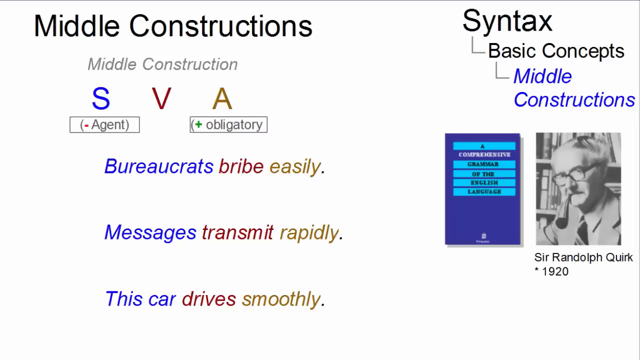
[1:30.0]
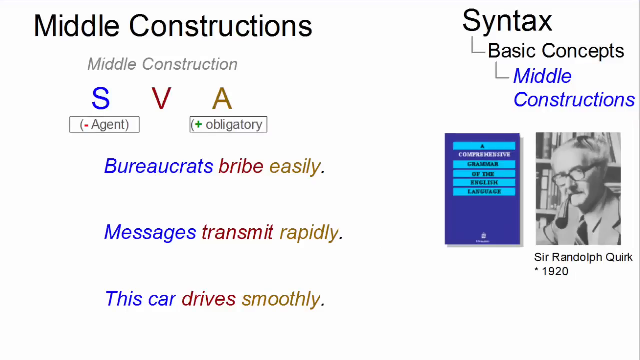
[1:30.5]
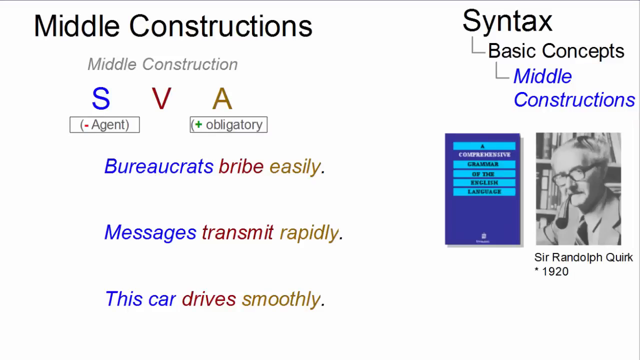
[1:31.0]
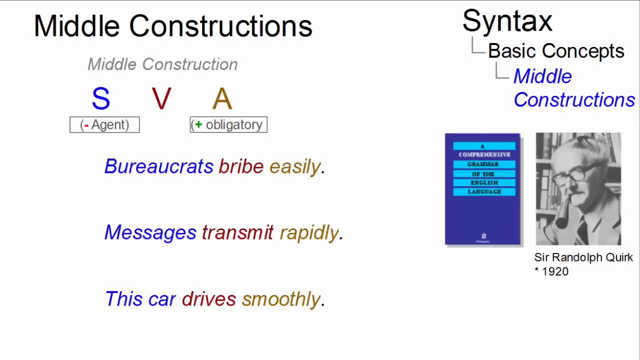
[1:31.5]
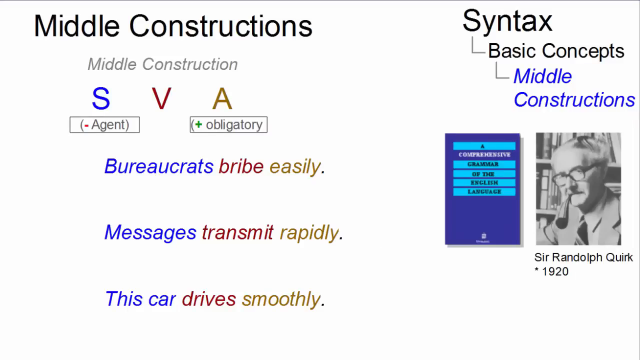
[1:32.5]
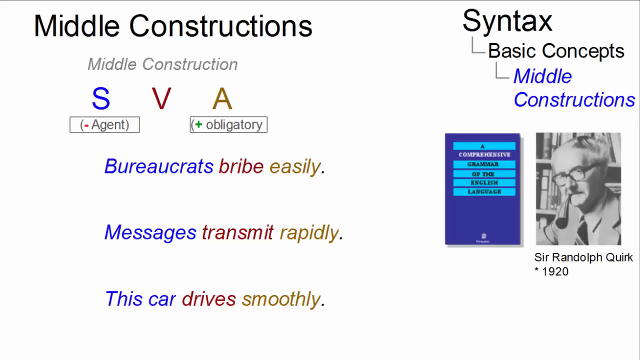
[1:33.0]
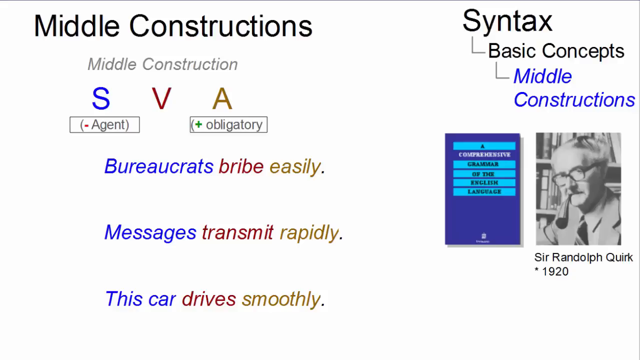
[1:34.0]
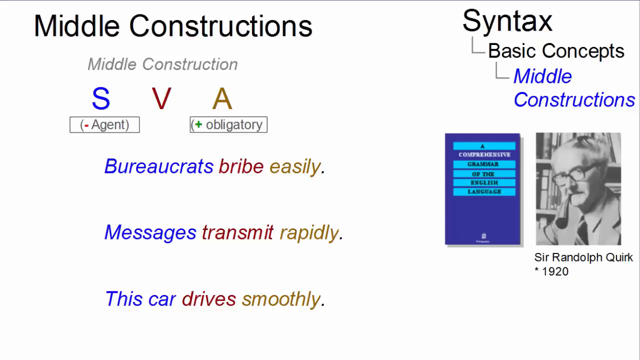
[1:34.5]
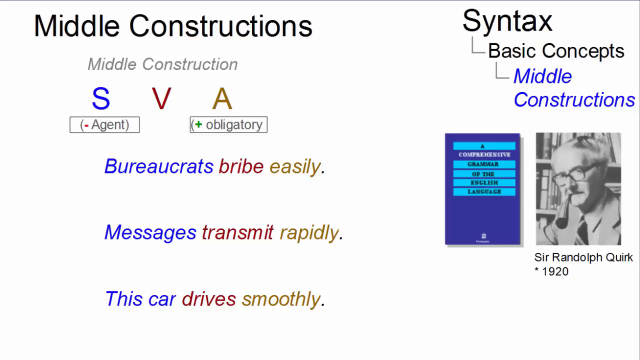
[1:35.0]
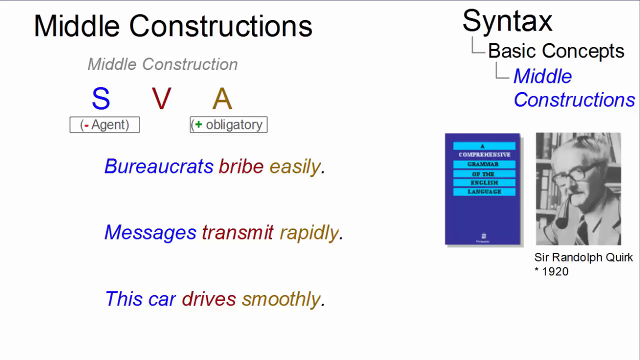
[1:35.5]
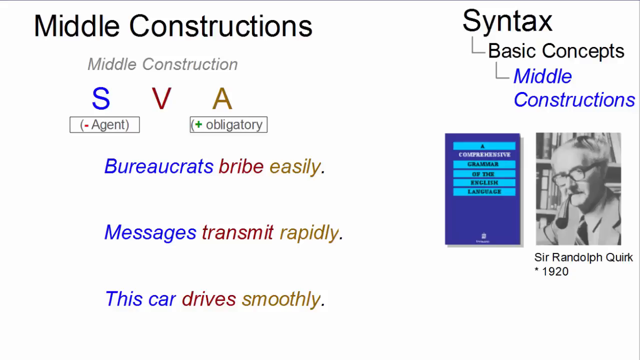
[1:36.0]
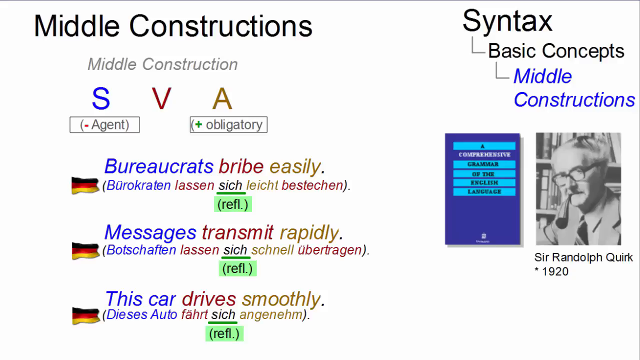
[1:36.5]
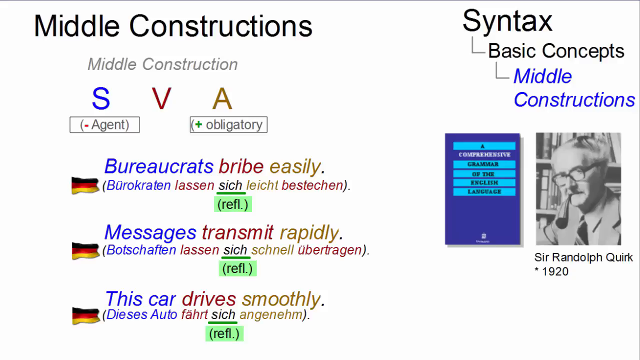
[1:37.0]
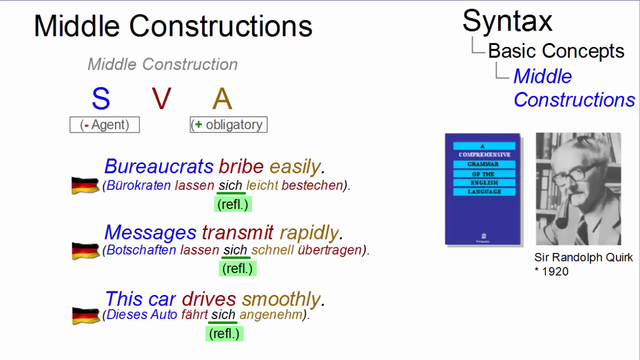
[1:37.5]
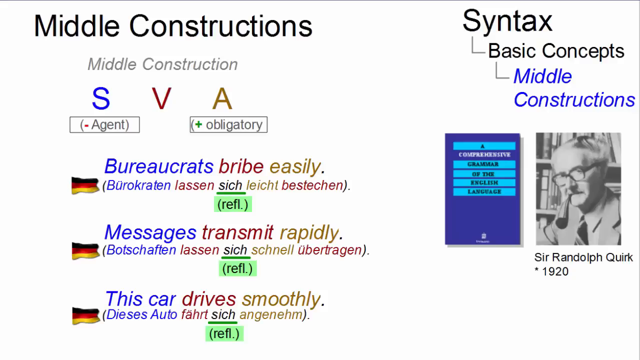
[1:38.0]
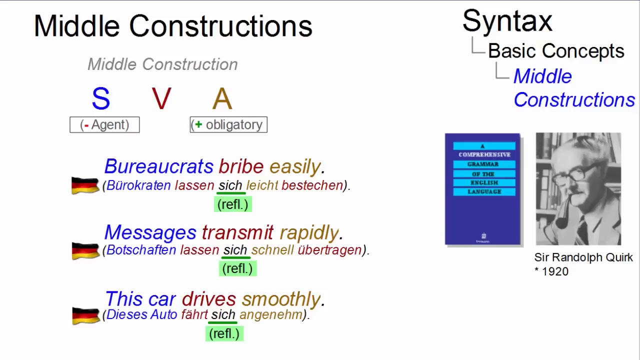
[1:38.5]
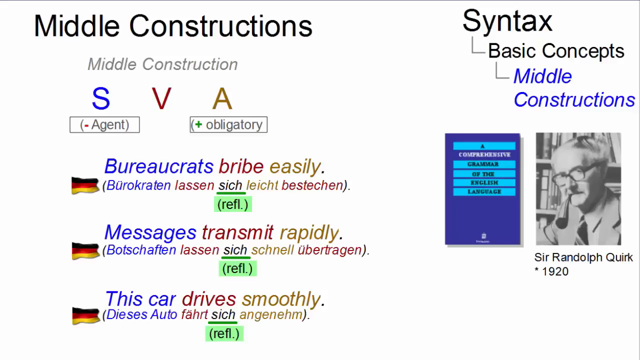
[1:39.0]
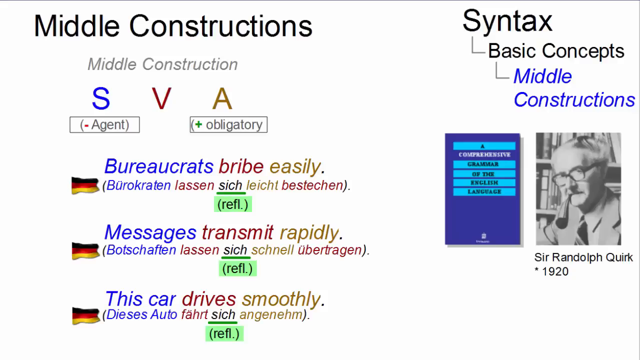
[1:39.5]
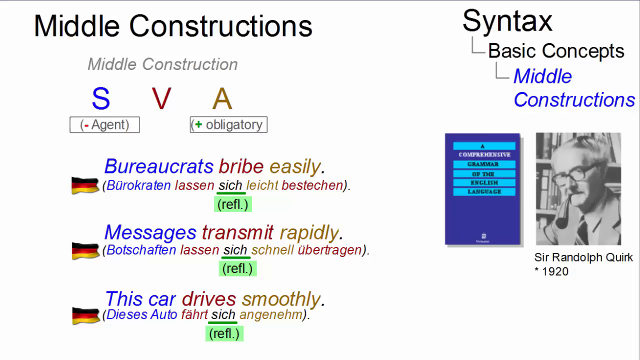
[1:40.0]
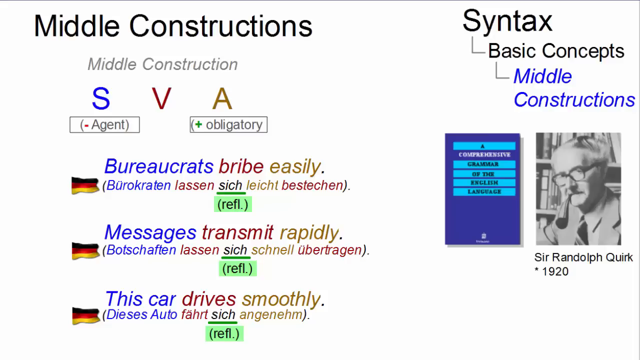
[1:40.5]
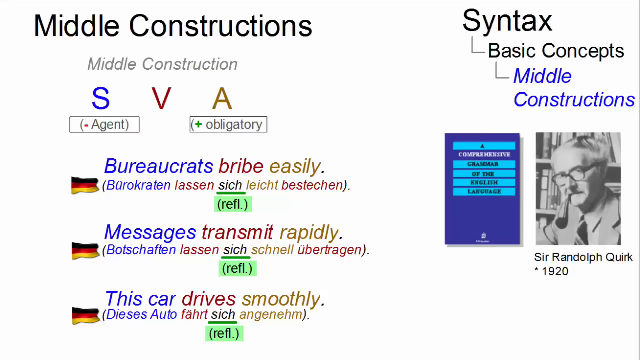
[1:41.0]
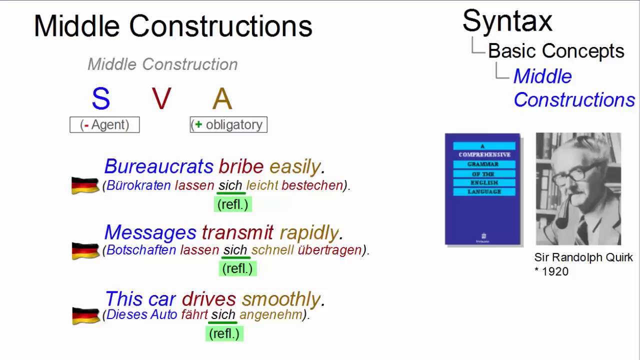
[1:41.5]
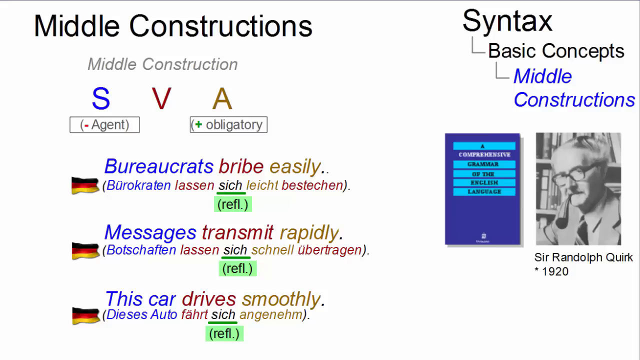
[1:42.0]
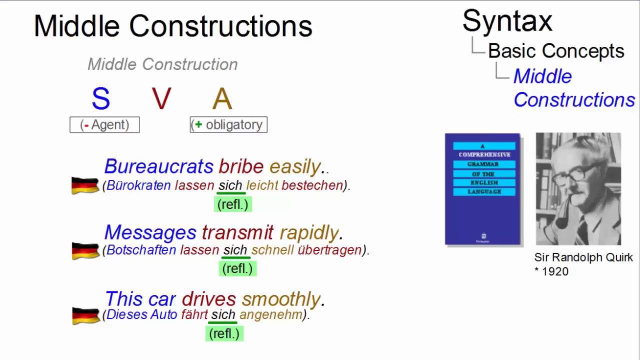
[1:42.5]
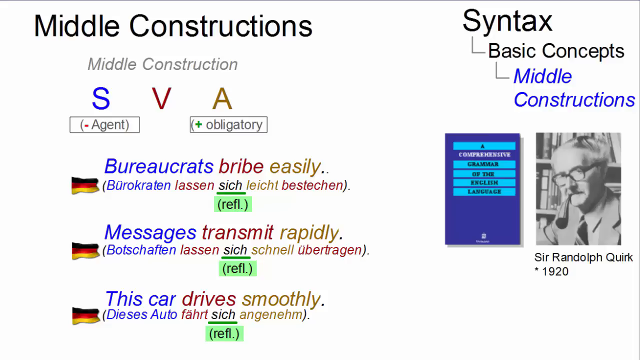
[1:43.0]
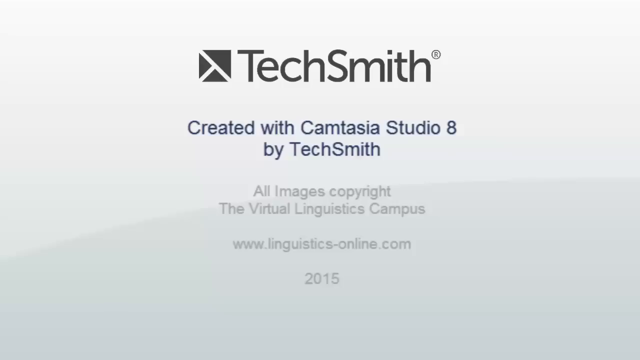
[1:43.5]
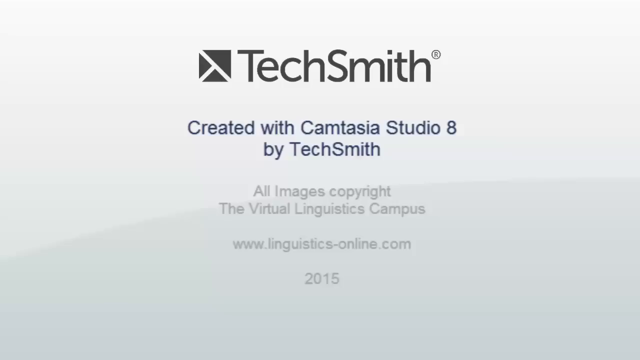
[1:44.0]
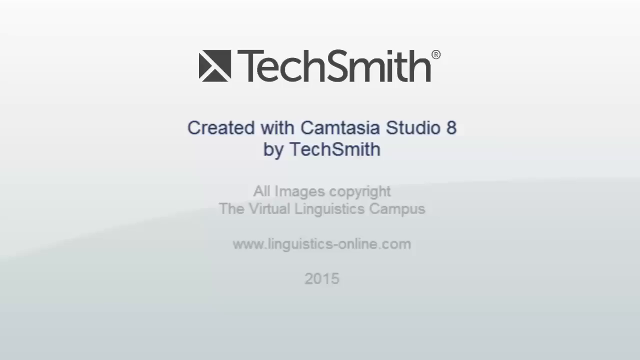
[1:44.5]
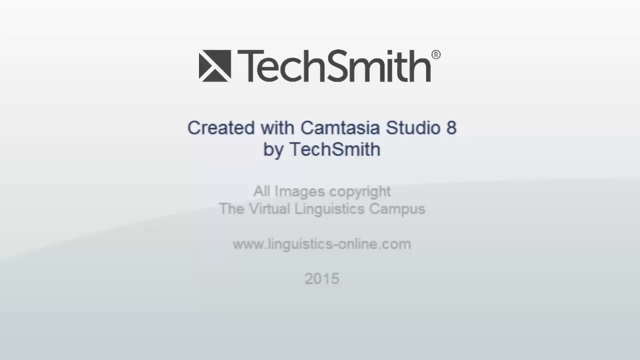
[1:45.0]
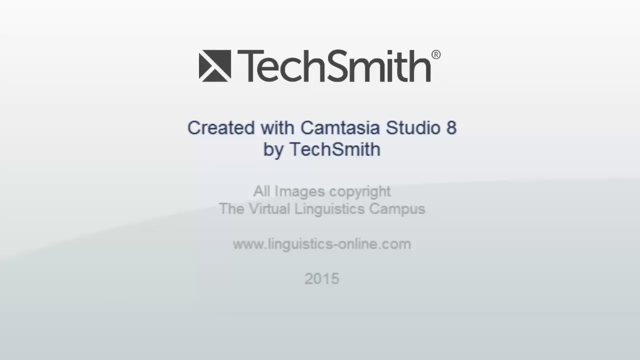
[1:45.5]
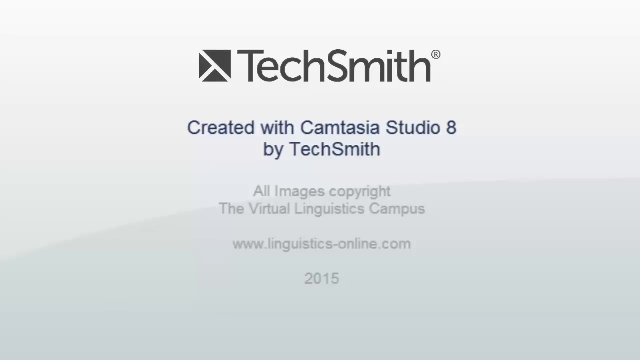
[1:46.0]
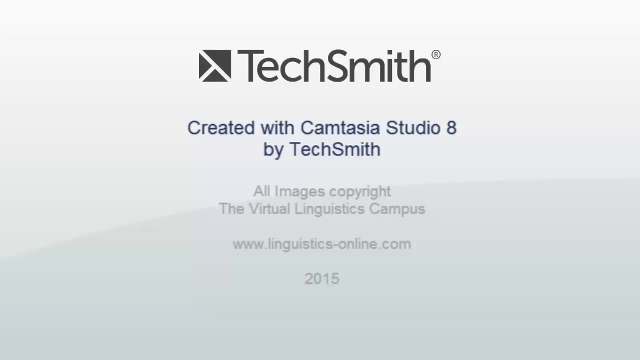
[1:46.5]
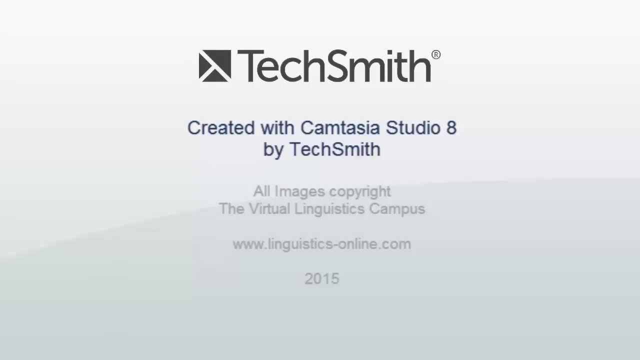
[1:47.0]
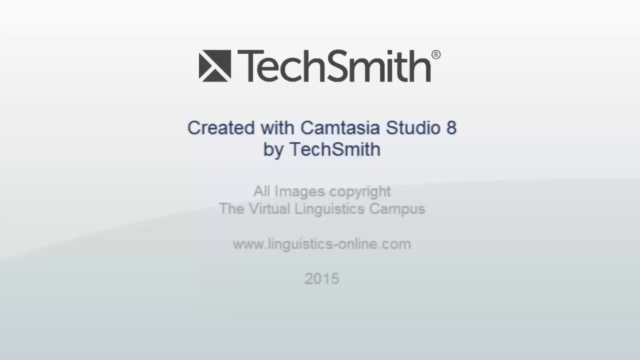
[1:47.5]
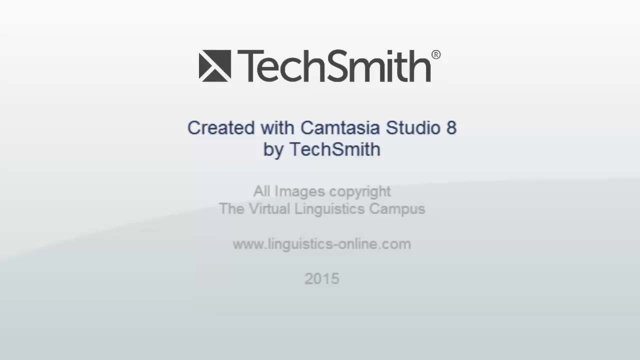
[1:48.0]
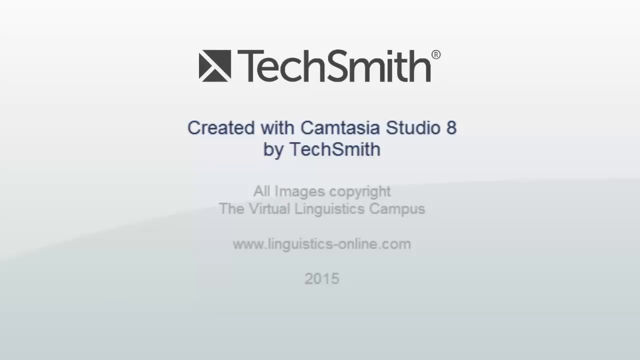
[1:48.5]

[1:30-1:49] The middle construction page shows SVA. S stands for subject, marked in blue, verbs are marked in red, and adverbials are in a brownish-orange color. The examples are "bureaucrats drive easily", "messages transmit rapidly" and "this car drives smoothly", and there is a picture of Sir Randolph Quirk. Later, the sentences appear translated into German, such as "bureaucraten lassen sich leicht". Everything is on a white background. There is also a book by Sir Randolph Quirk from the 1920s called "A Comprehensive Grammar of the English Language". The video then moves to the ending screen, which reads "created by Camtasia Studio 8 by TechSmith" and "All images are copyrighted", with Visual Linguistic Campus 2016.